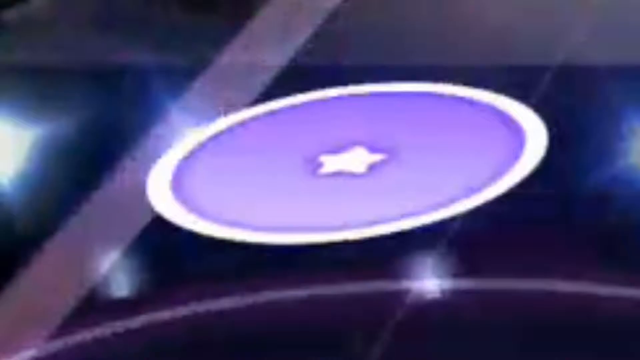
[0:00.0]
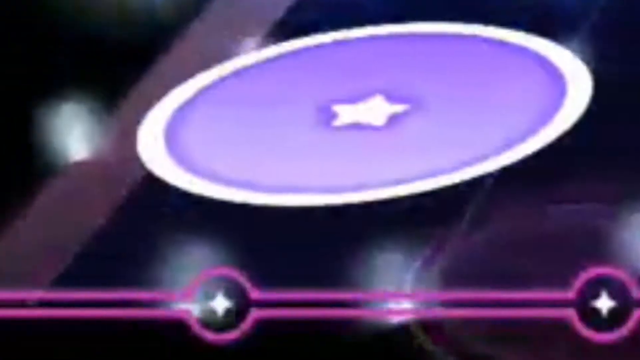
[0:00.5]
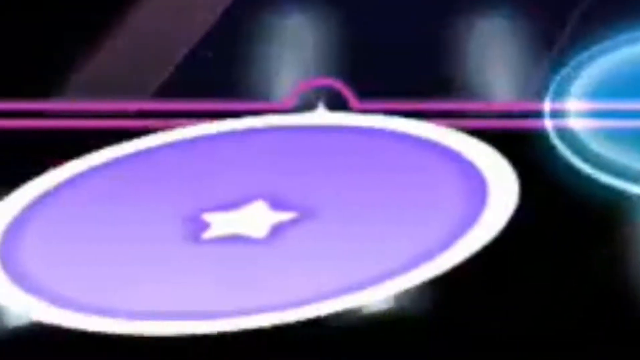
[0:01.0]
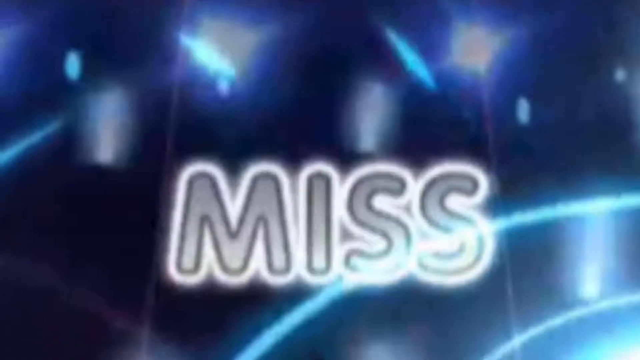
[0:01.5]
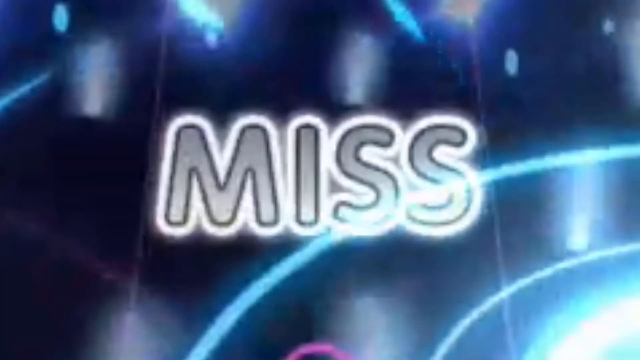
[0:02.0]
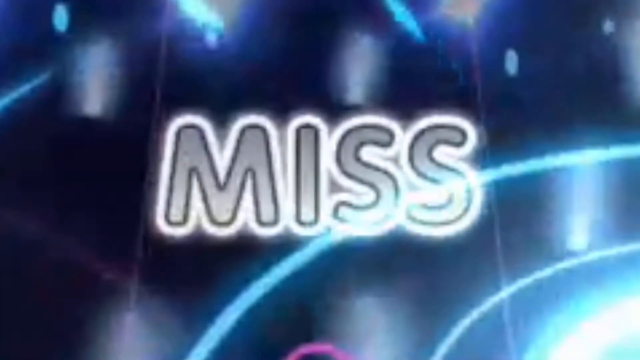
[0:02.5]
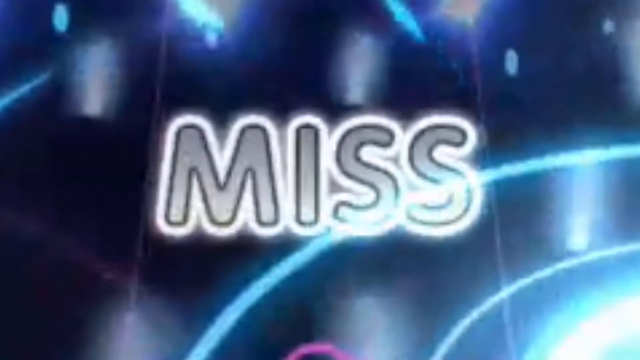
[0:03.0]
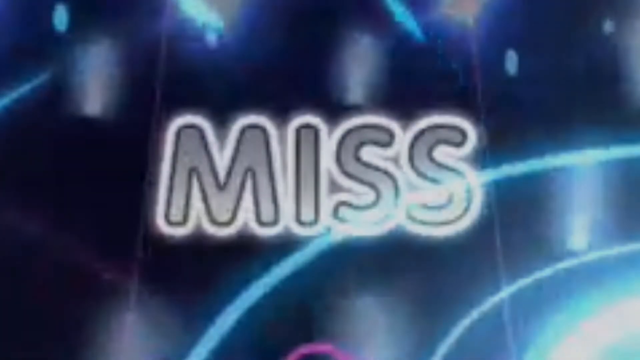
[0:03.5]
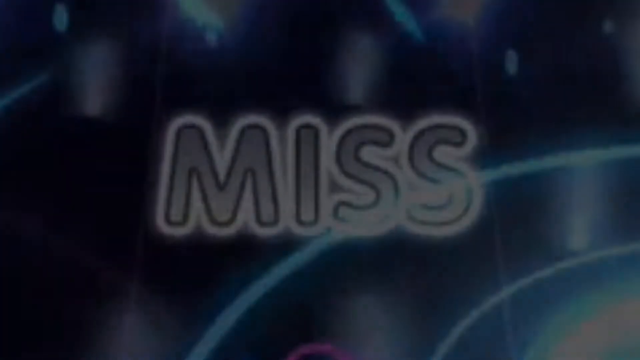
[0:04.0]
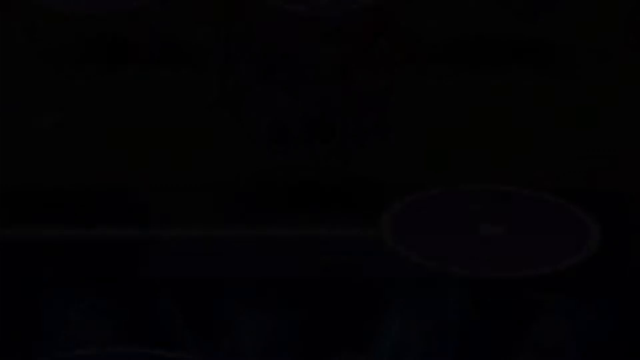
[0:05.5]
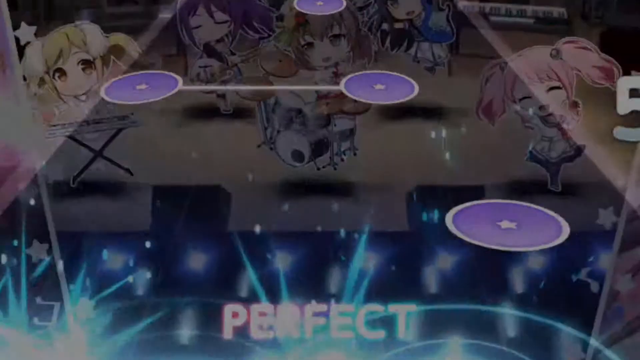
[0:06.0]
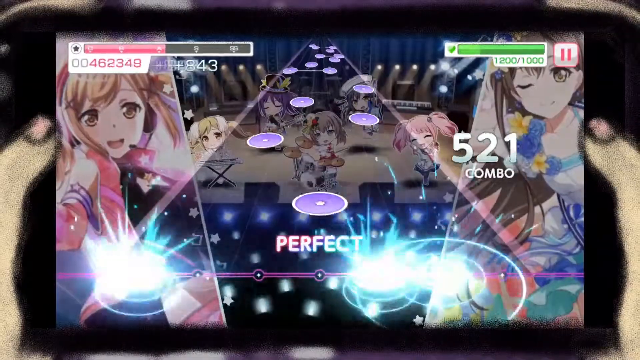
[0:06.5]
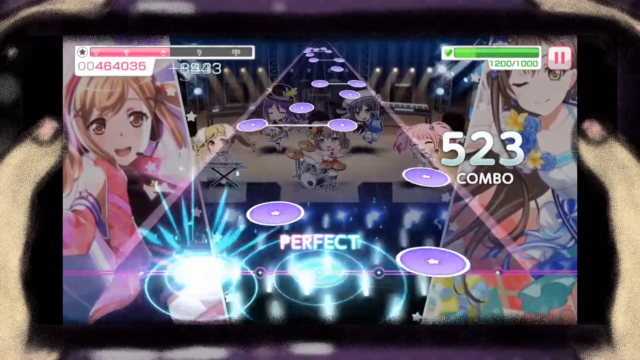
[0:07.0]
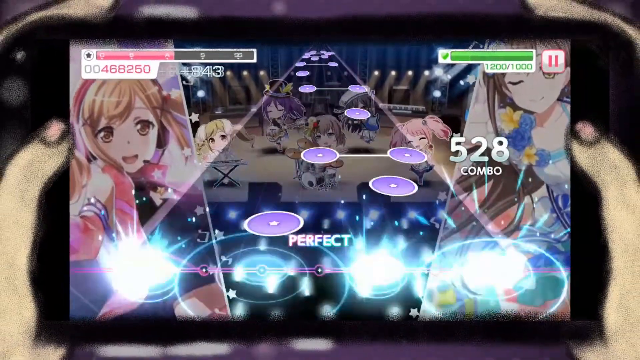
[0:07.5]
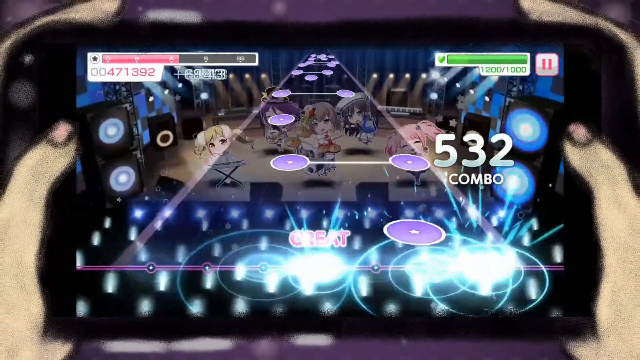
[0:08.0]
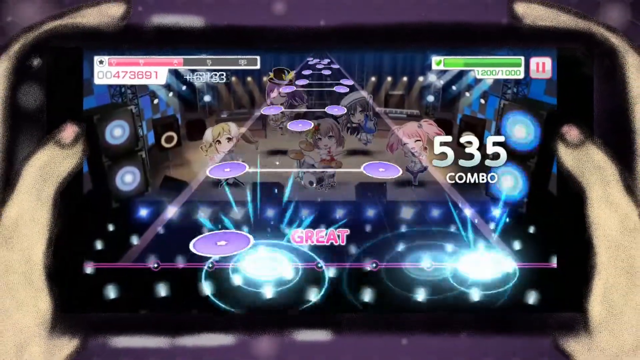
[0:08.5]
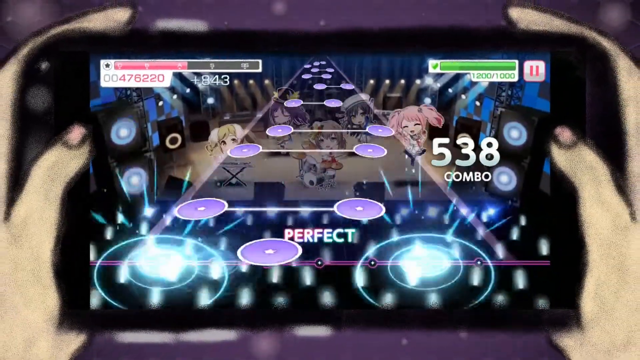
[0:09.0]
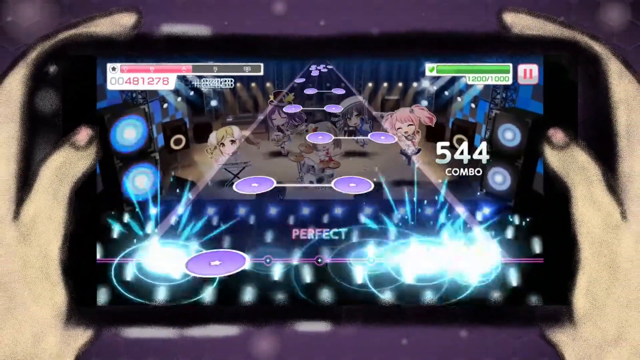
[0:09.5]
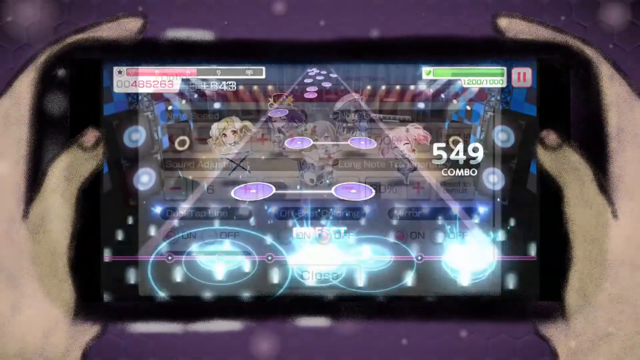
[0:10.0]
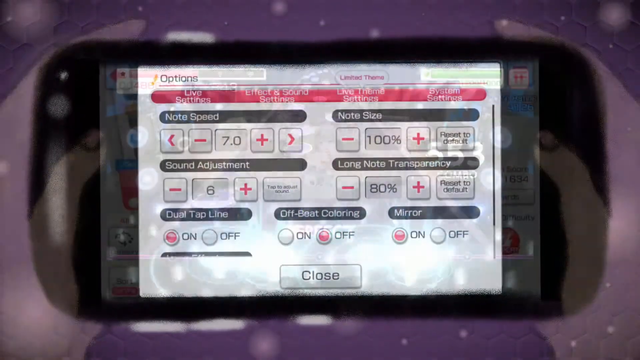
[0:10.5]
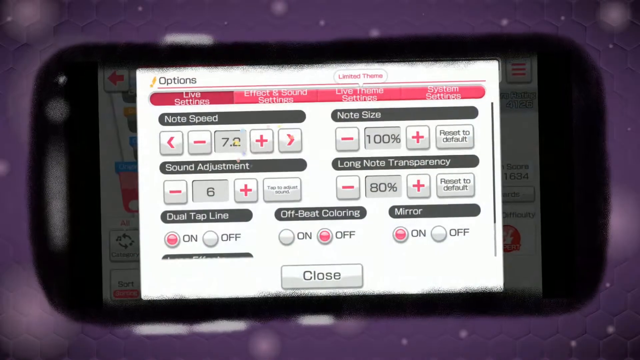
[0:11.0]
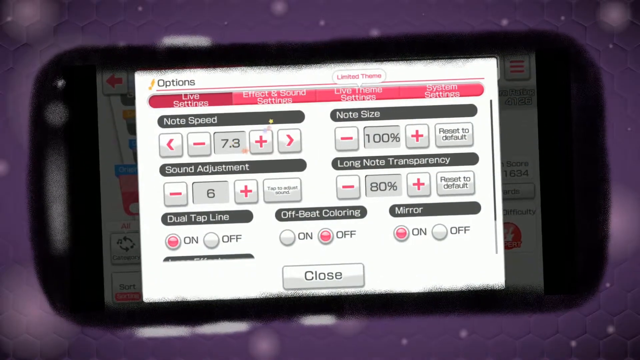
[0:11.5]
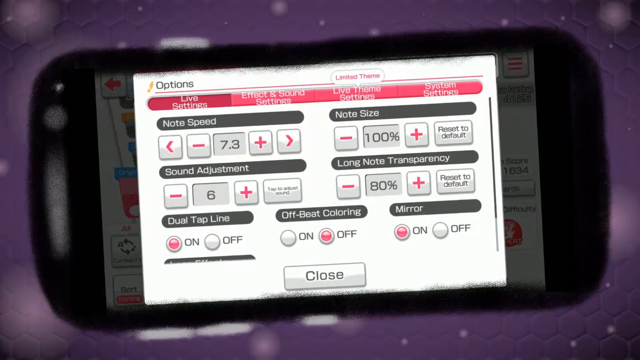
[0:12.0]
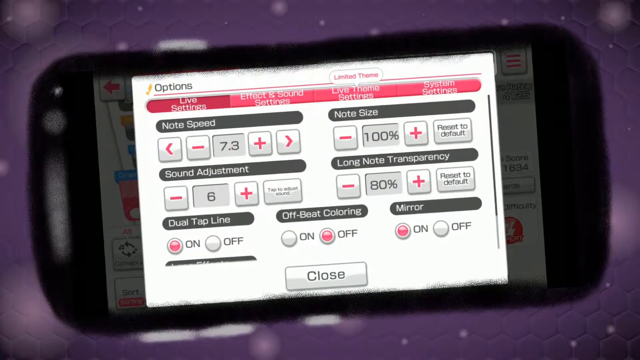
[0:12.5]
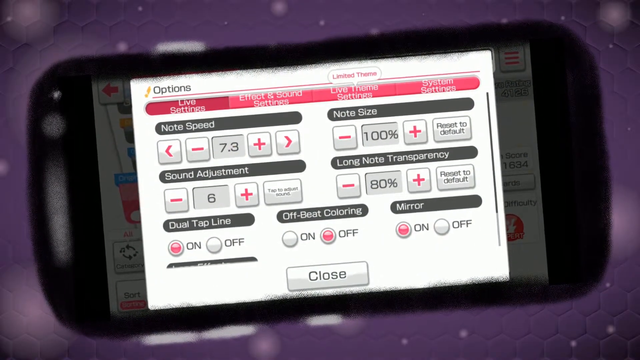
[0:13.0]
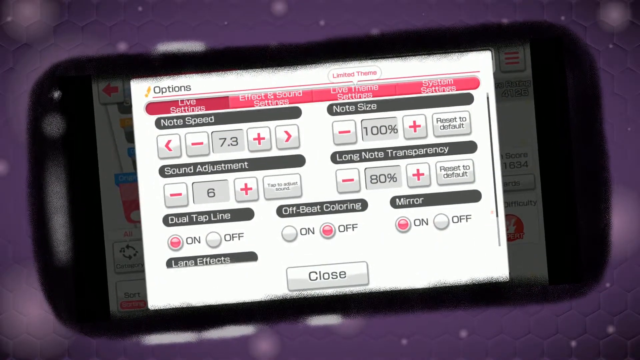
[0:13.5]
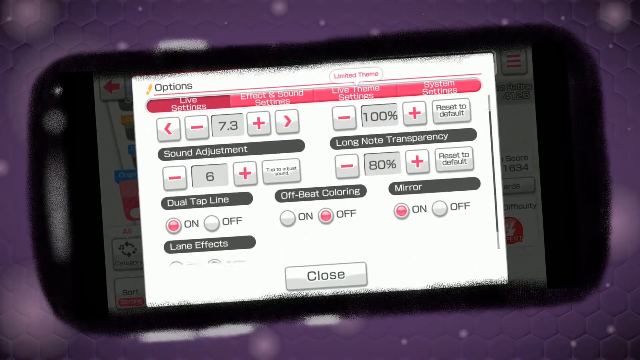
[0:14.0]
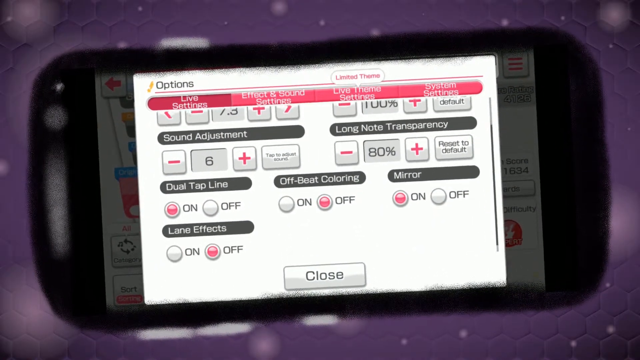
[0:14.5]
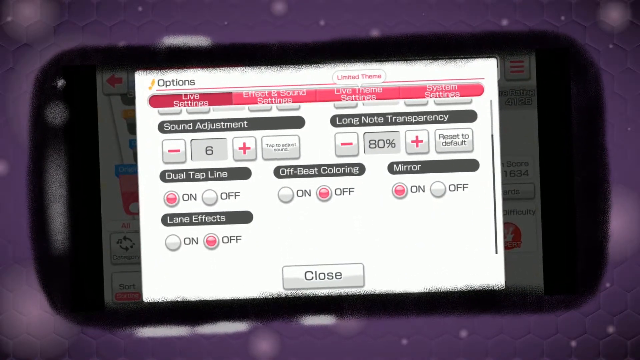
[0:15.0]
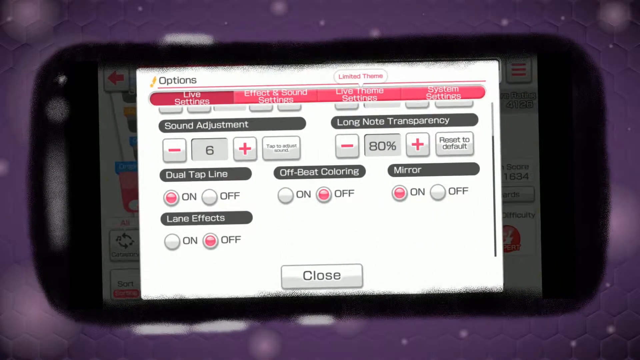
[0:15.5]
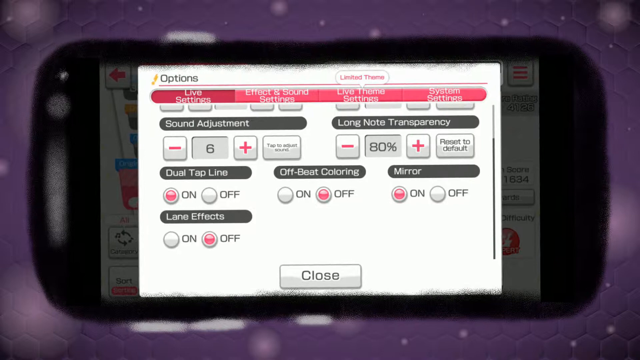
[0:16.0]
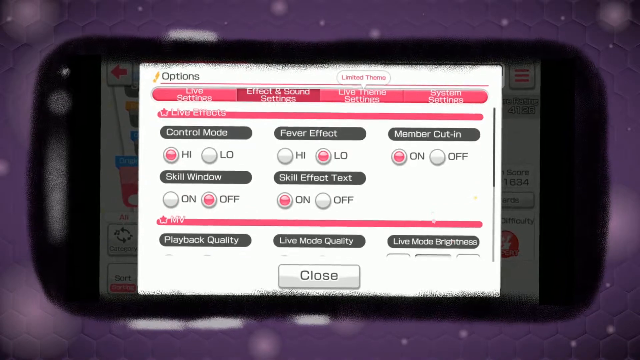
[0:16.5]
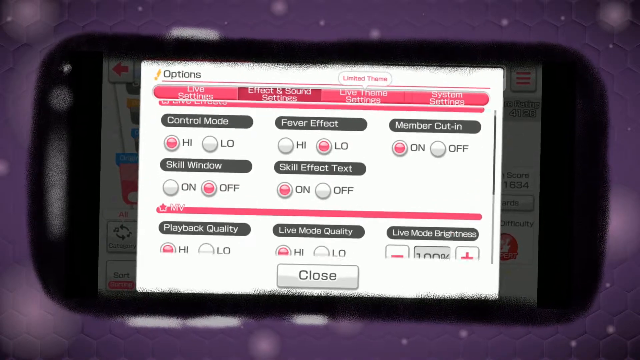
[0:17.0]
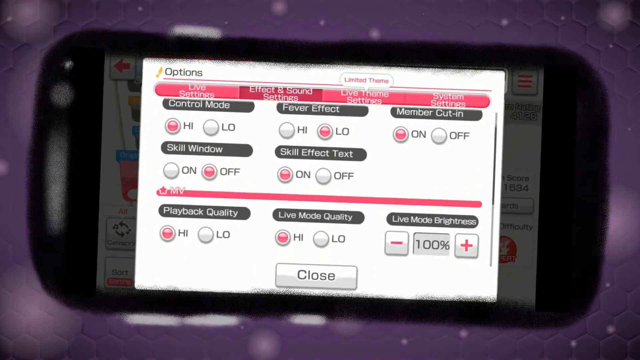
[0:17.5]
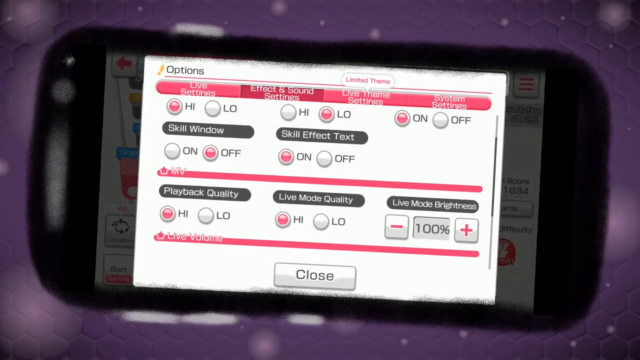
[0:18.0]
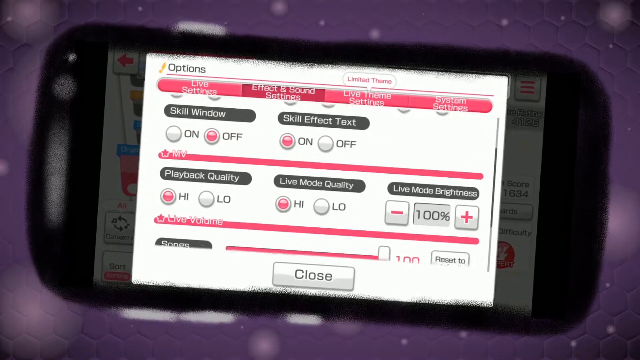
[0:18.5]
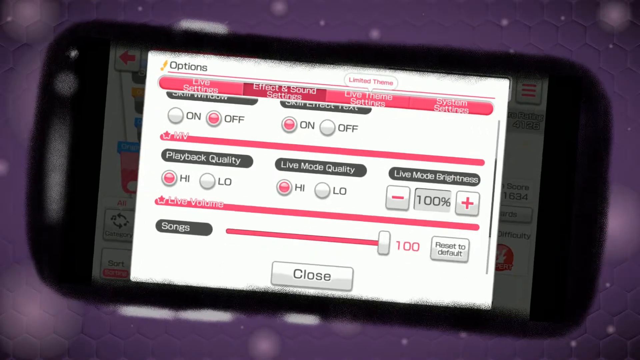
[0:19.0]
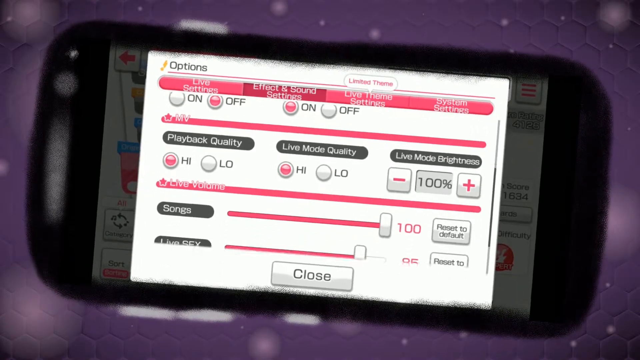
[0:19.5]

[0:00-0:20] A rhythm game is the focus. It opens with some kind of buttons traveling across the screen and the word "Miss" appearing. The image fades to black, and the game, being played on some kind of console, is shown in full. It looks like a rhythm game in which some kind of girls are singing, with what looks like a band in the background, and the man playing is supposed to press the button in time to build a combo. The number 535 clearly goes up as he presses the button perfectly to build the combo. The view then shifts to what looks like the game's settings, showing options such as note speed, note size, sound adjustment, long note transparency, dual top line, offbeat coloring and mirror, each with a number associated with it. The hands that were holding the console are no longer visible. He slides down the options, then switches to the effects and sound settings.